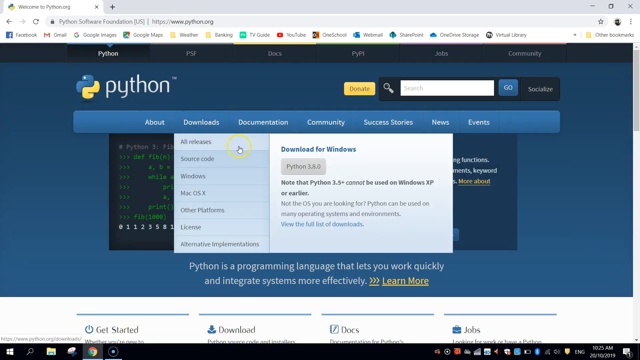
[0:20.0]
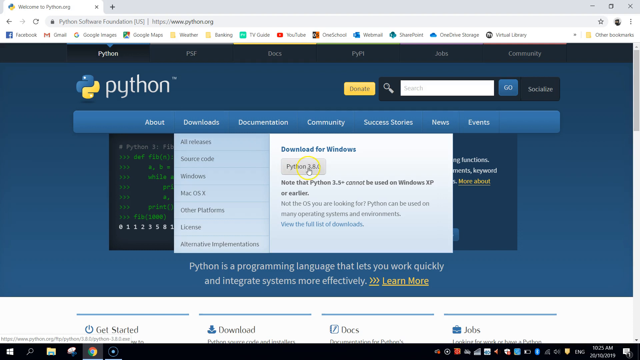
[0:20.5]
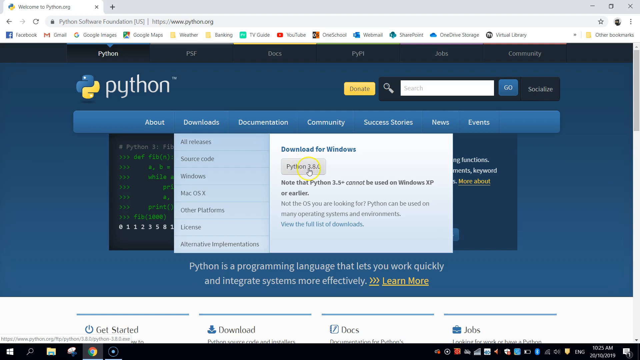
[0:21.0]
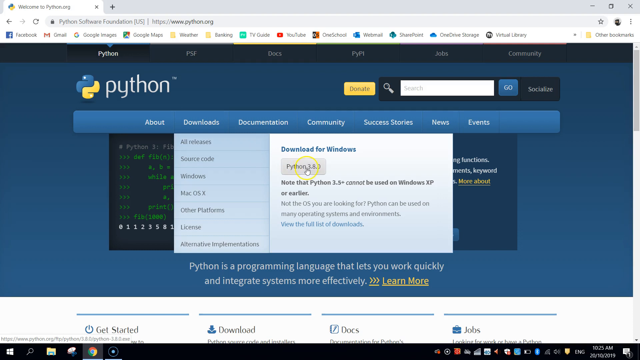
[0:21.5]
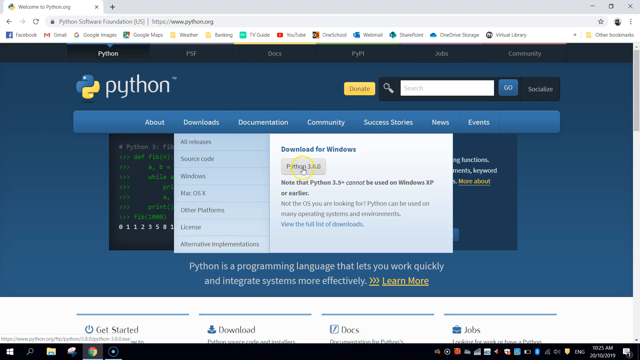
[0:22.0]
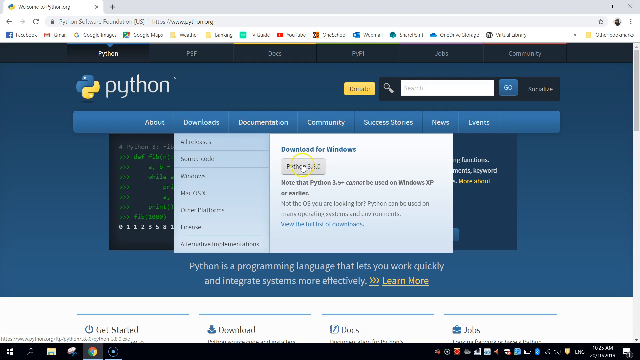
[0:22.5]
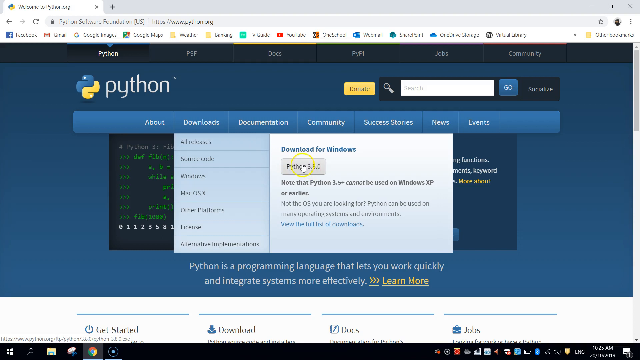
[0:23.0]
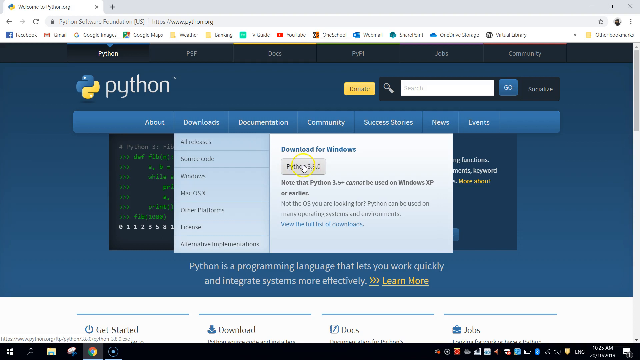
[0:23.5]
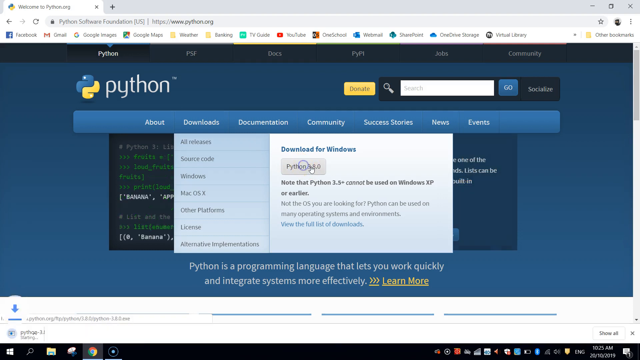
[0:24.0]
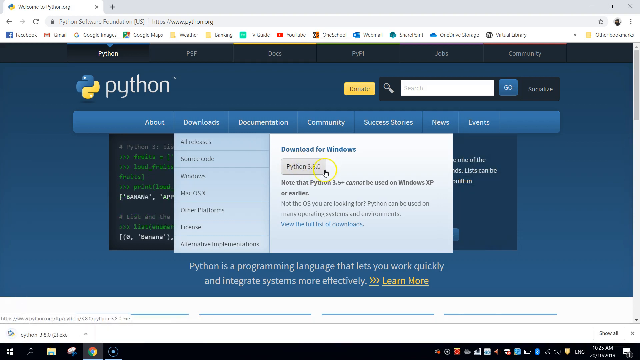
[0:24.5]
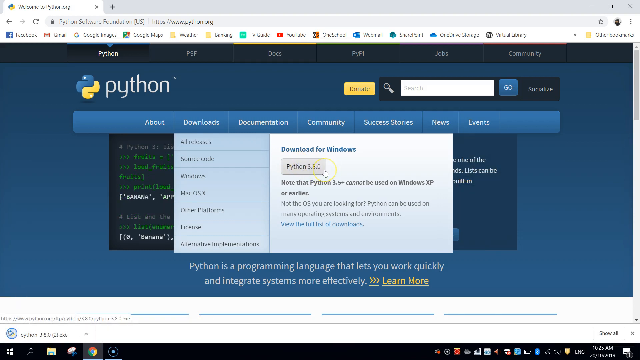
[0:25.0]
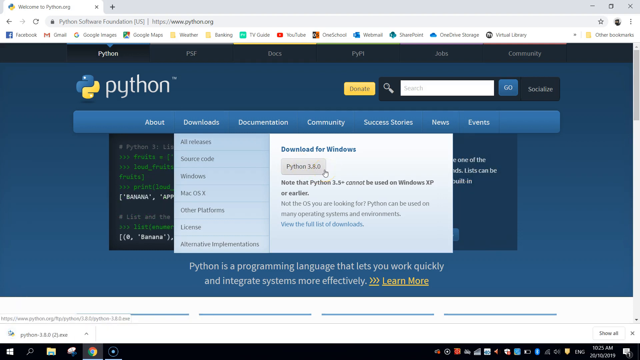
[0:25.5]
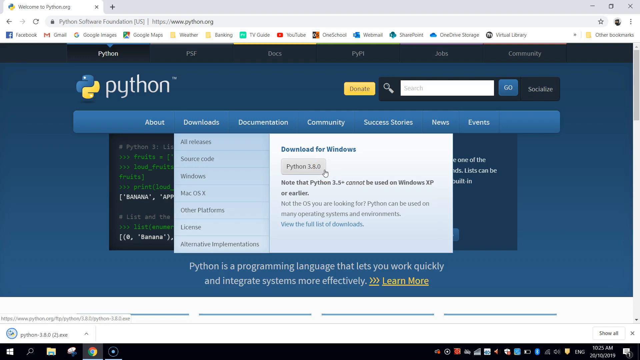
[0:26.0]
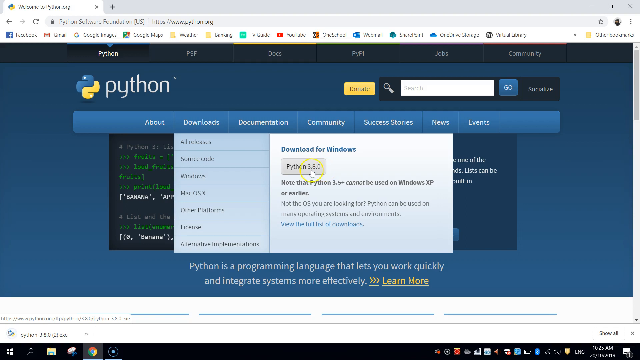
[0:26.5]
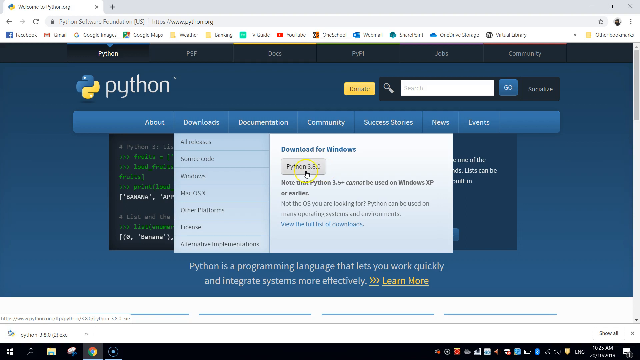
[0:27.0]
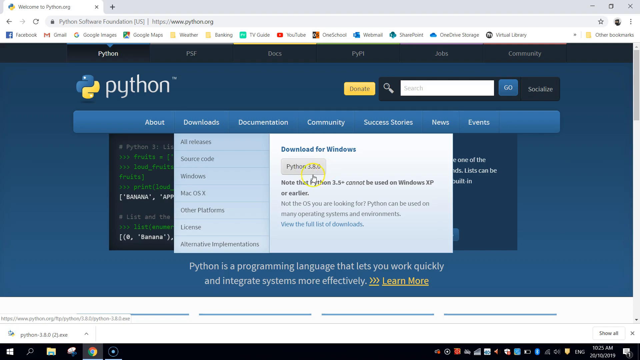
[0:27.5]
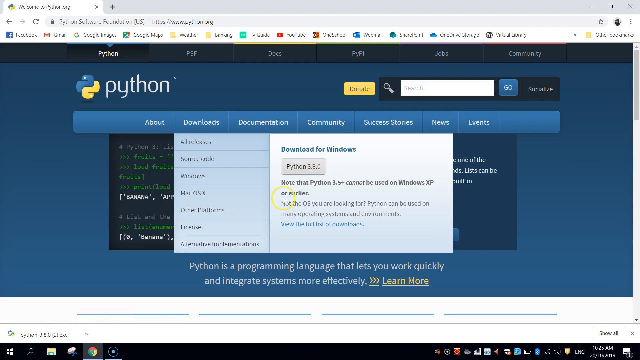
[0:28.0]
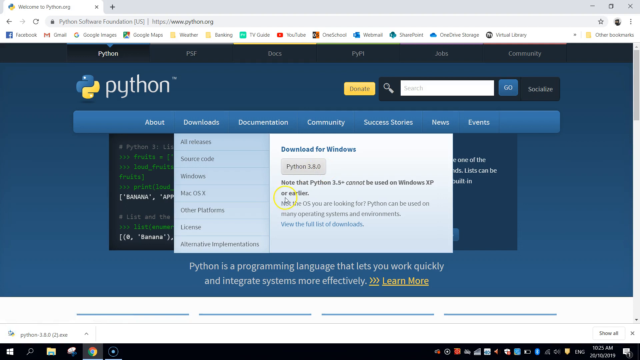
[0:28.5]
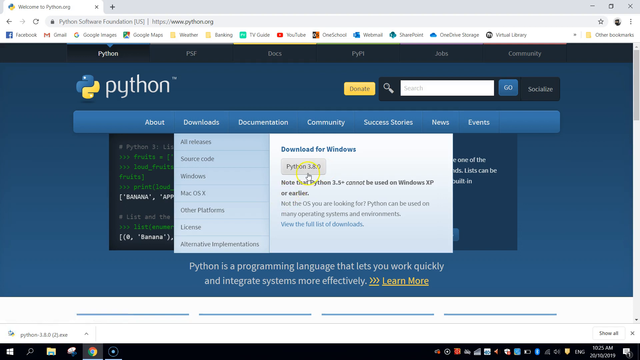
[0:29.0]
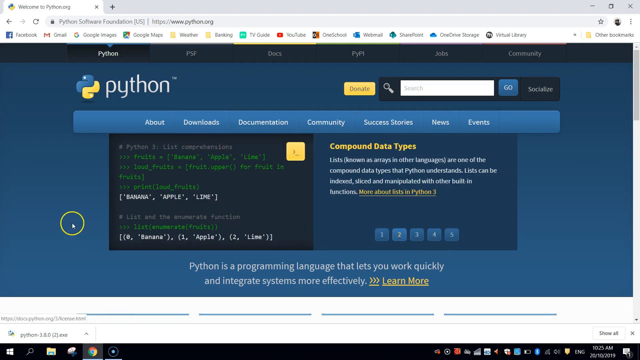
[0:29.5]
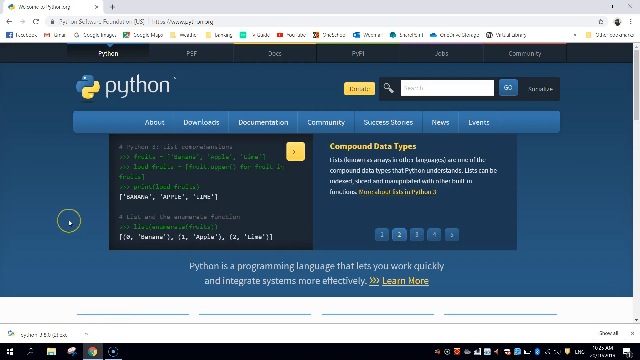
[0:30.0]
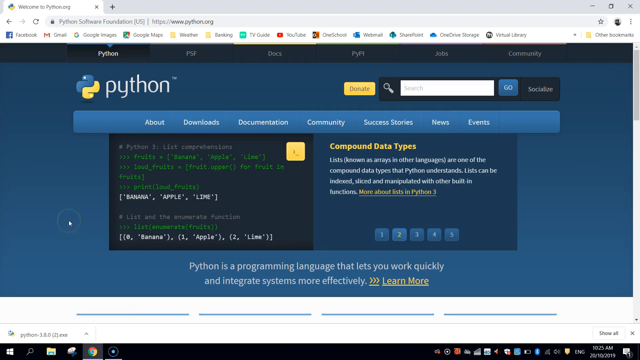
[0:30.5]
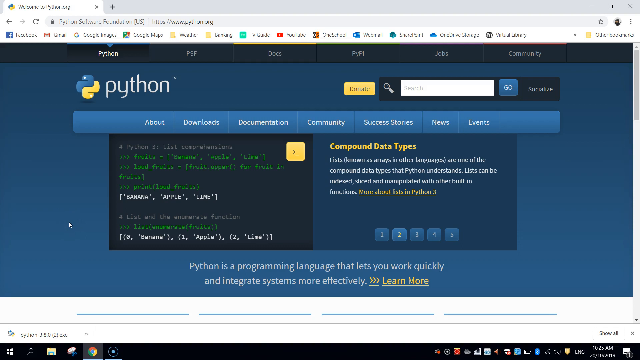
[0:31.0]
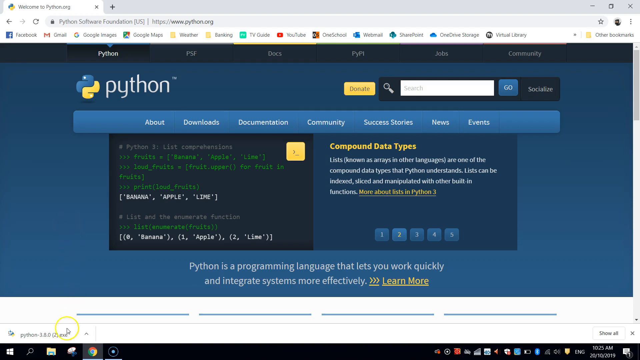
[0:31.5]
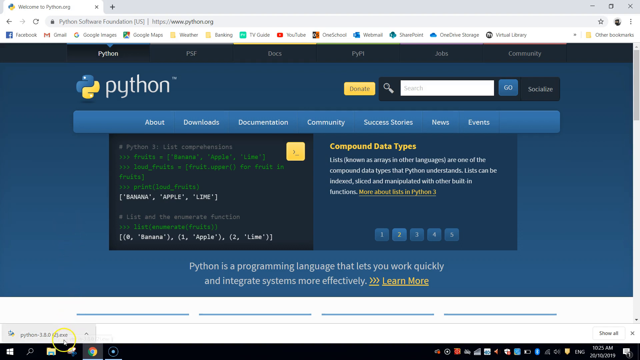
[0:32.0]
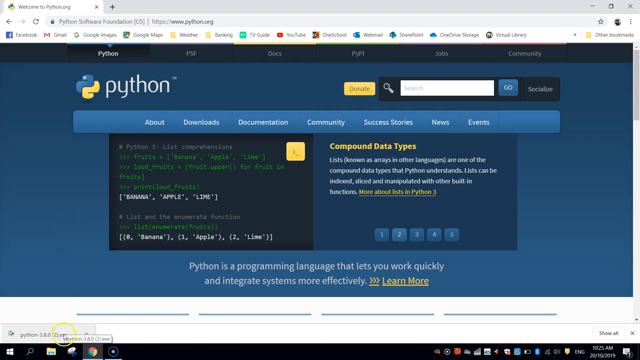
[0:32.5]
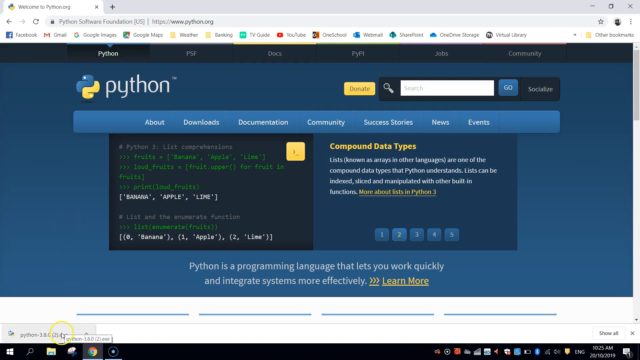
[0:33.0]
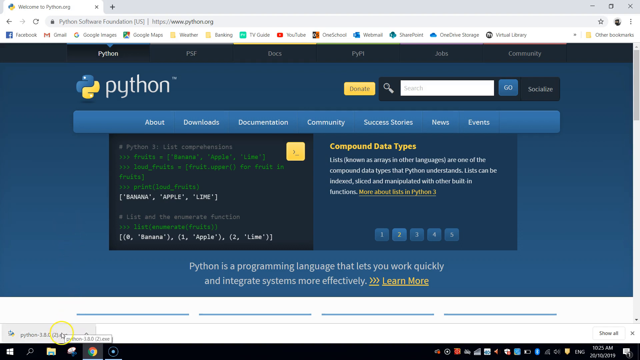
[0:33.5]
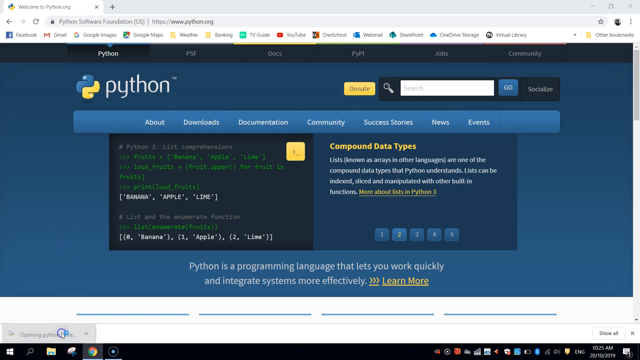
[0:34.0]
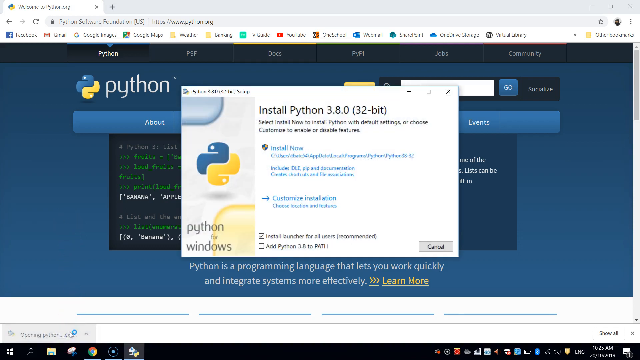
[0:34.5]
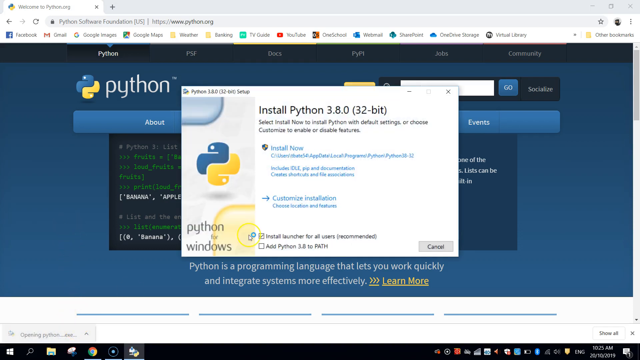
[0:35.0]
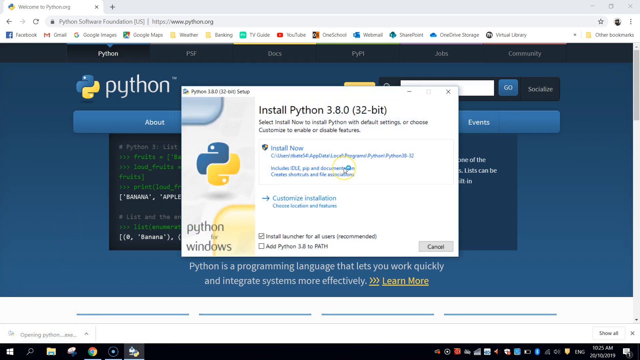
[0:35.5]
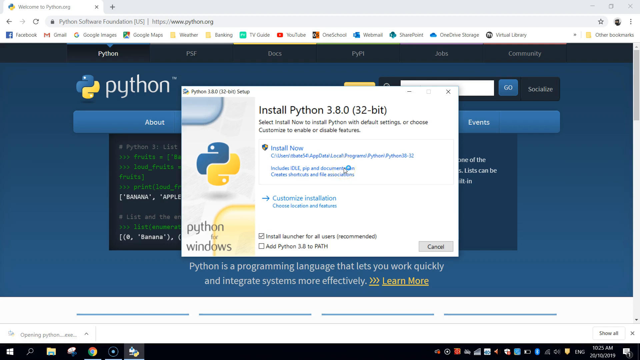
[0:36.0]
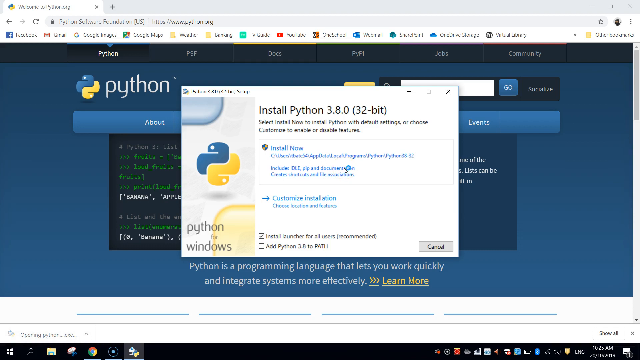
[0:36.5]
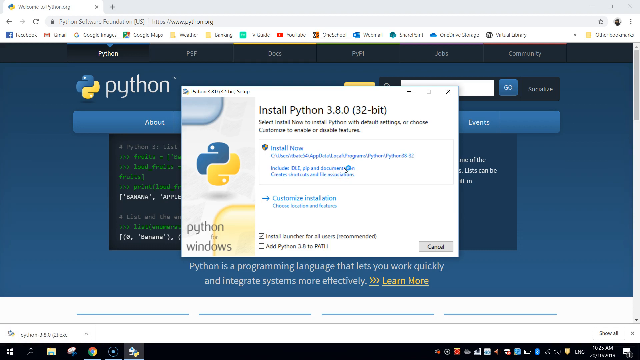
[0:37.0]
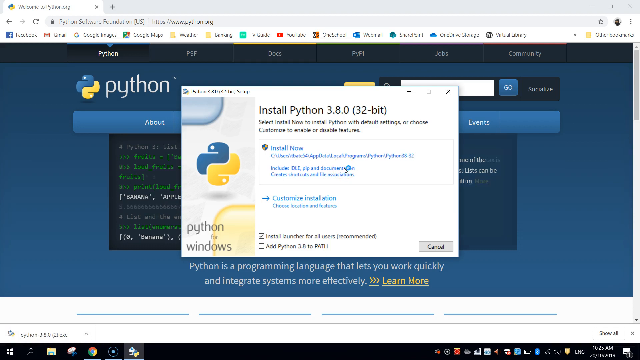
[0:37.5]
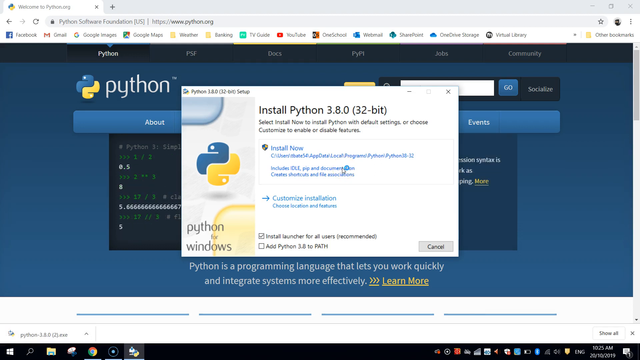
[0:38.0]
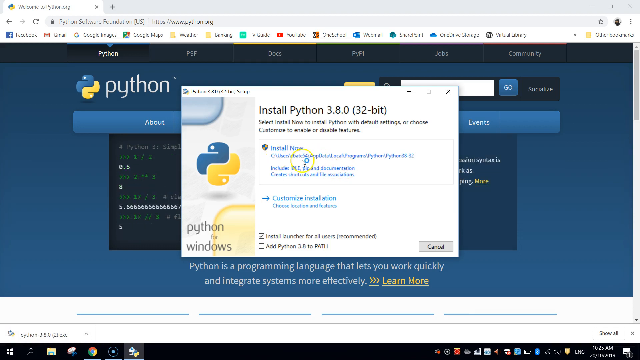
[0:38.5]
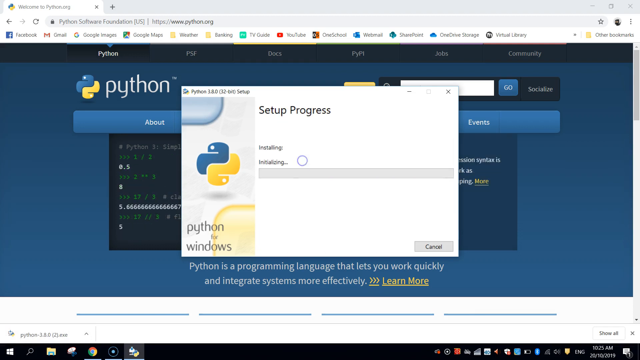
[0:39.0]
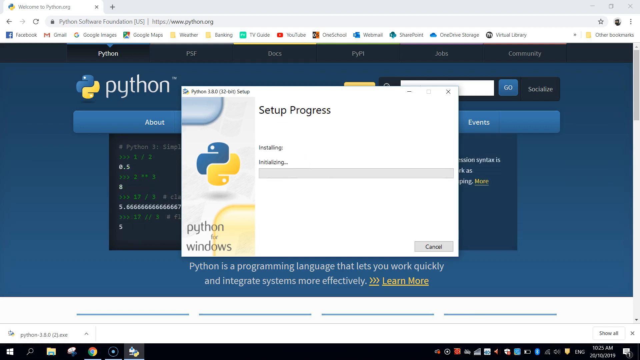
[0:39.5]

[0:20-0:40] On the Downloads tab, the user hovers the cursor over the Python 3.8.0 textbox under the Download for Windows title on the right side, then clicks the Python 3.8.0 button. A downloaded file named Python 1.8.10 exe appears at the bottom left of the screen. The user clicks this download, and a new window titled Python 3.8.0 pops up with the text "Install Python 3.8.0 32-bit", a description, a Python logo, an Install Now button, a Cancel button, and a Custom Install button. After waiting for it to load, the user clicks Install Now, and the installation proceeds: an installing text appears with a loading green bar showing the setup progress of Python for Windows, along with a setup progress title, a Cancel button, and the Python logo on the left with the text Python for Windows.